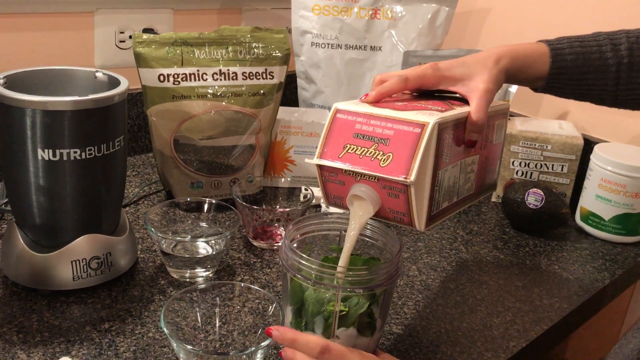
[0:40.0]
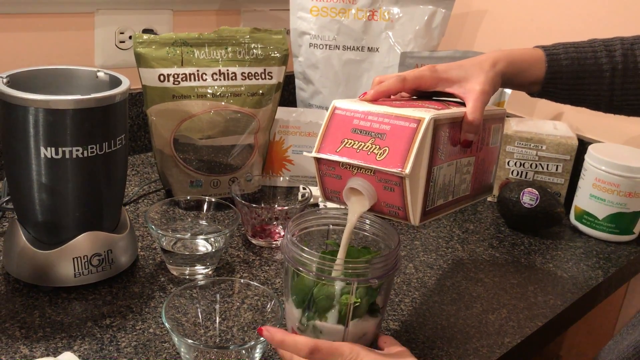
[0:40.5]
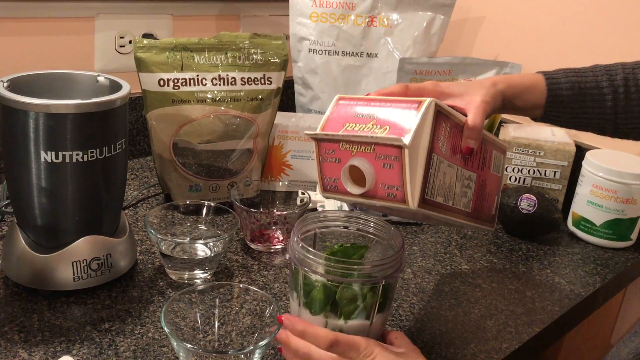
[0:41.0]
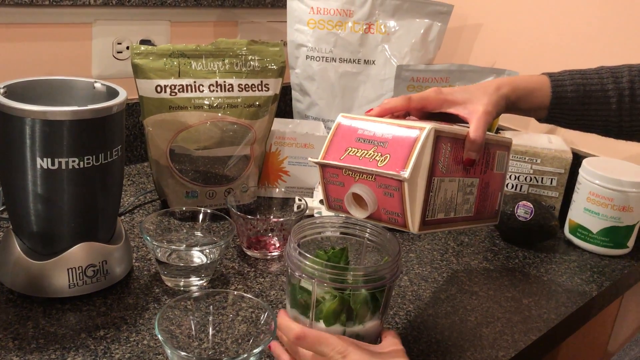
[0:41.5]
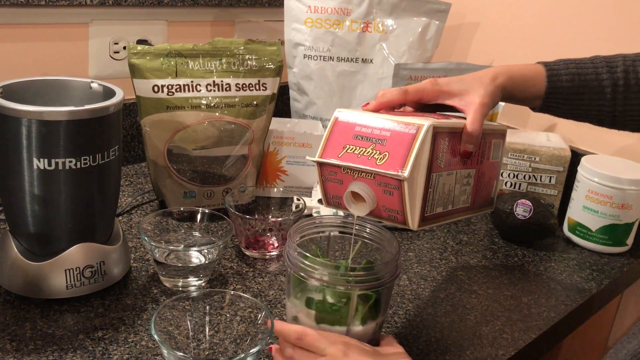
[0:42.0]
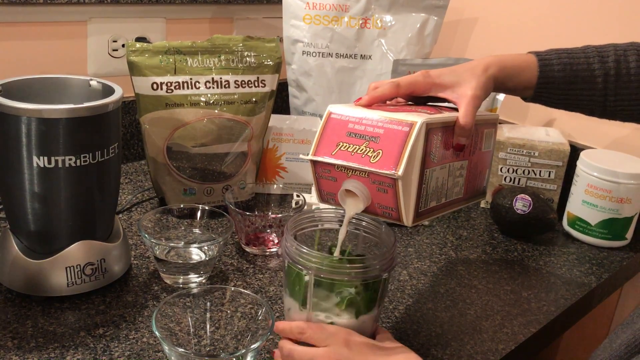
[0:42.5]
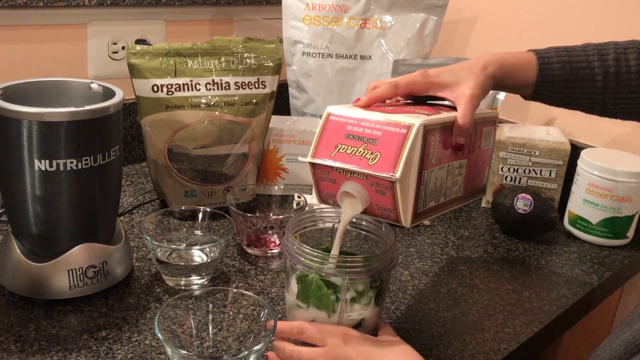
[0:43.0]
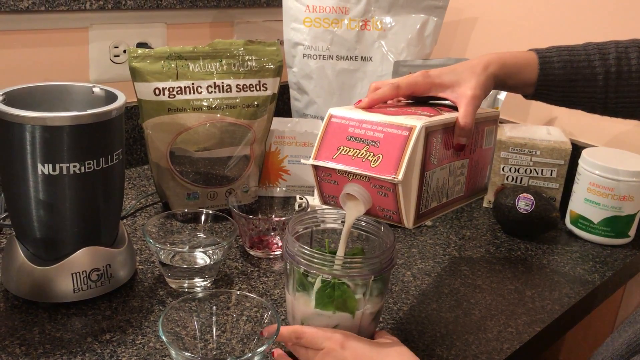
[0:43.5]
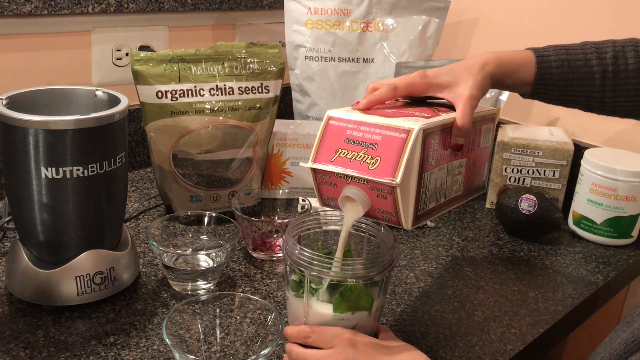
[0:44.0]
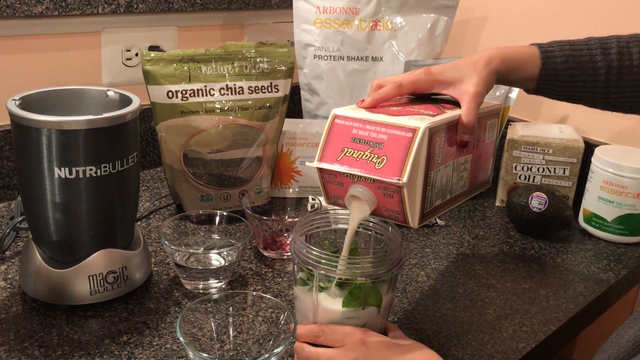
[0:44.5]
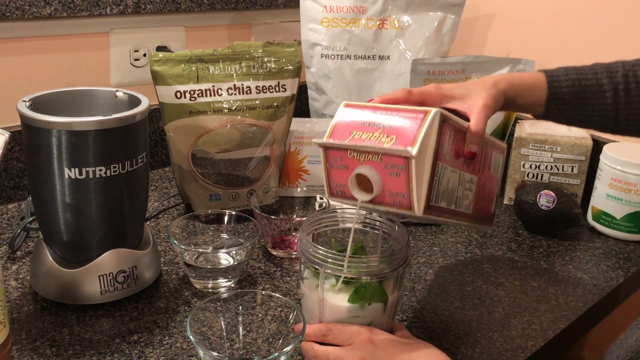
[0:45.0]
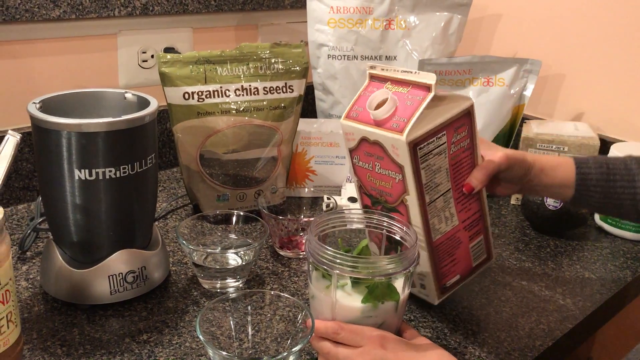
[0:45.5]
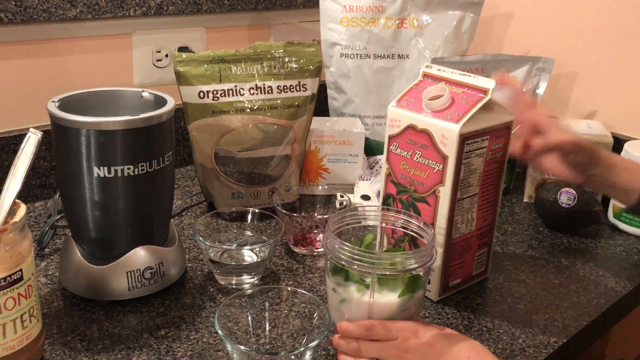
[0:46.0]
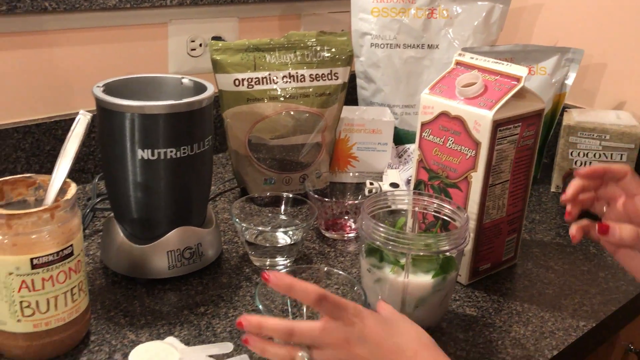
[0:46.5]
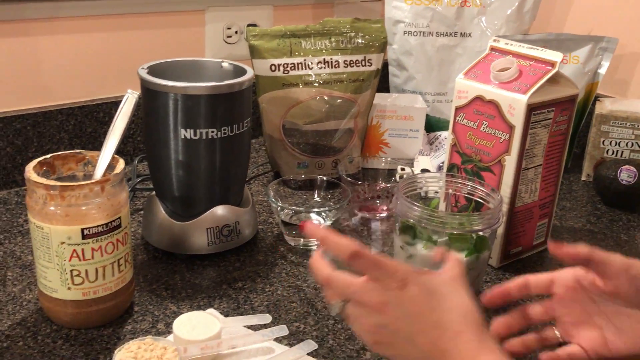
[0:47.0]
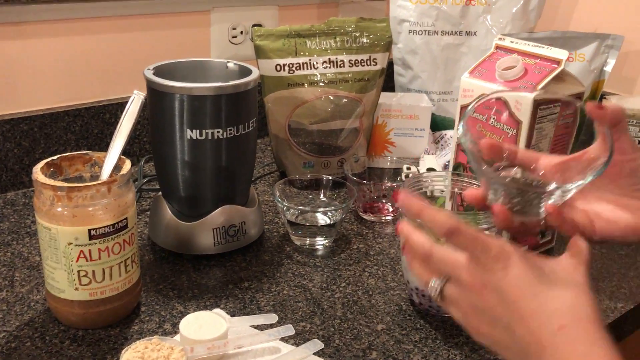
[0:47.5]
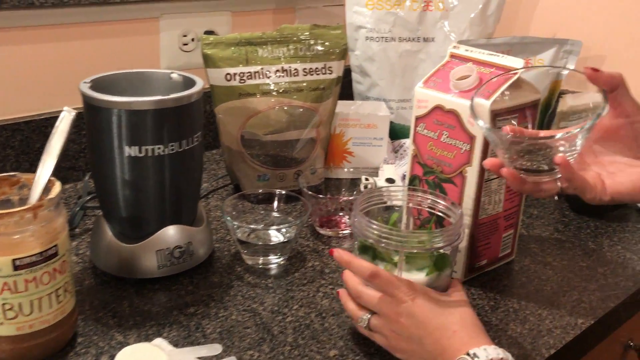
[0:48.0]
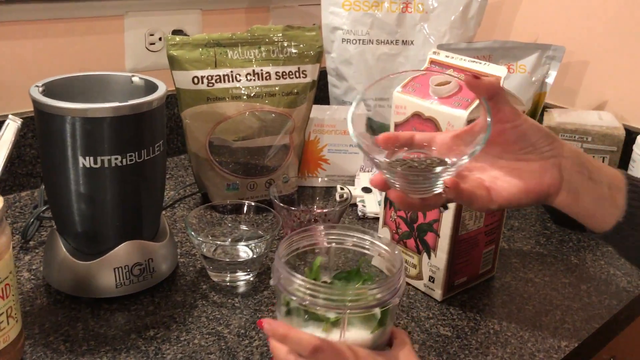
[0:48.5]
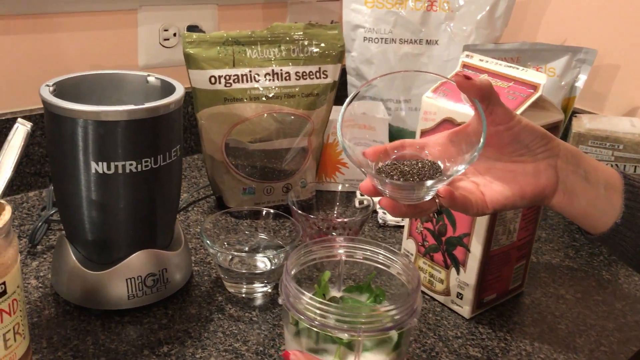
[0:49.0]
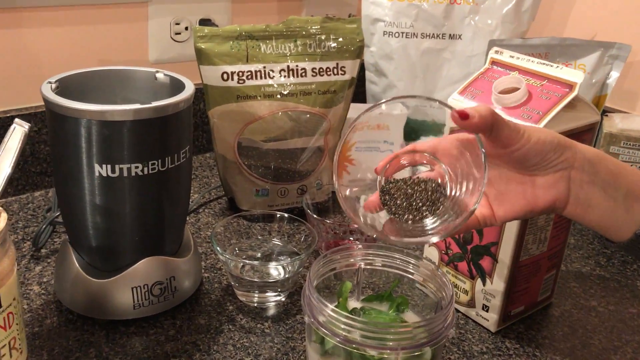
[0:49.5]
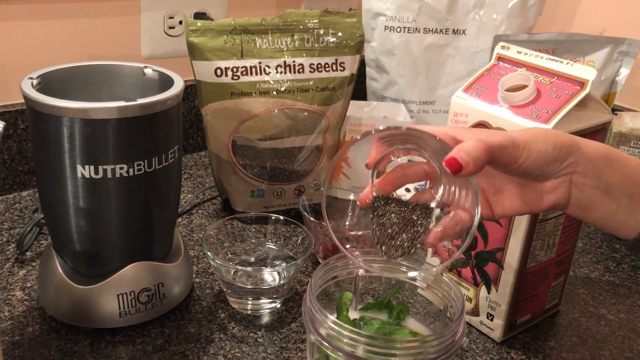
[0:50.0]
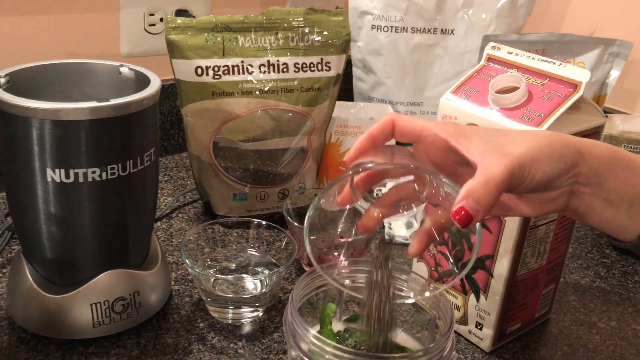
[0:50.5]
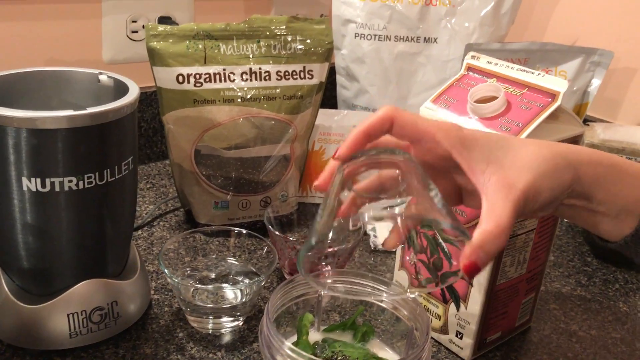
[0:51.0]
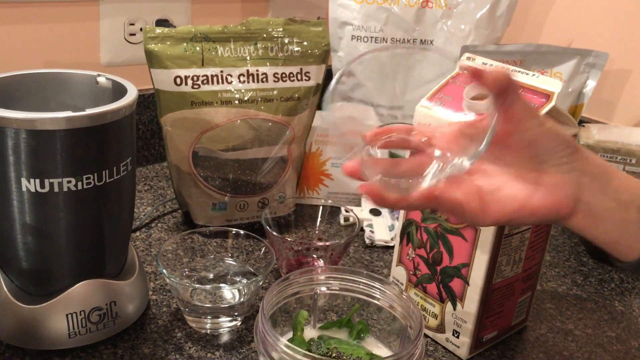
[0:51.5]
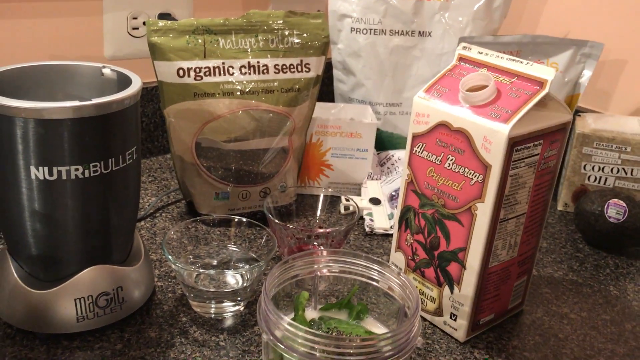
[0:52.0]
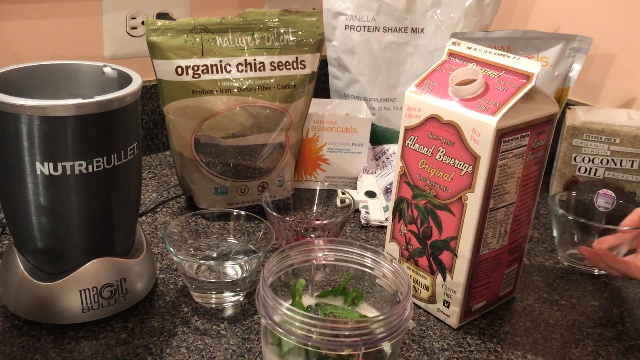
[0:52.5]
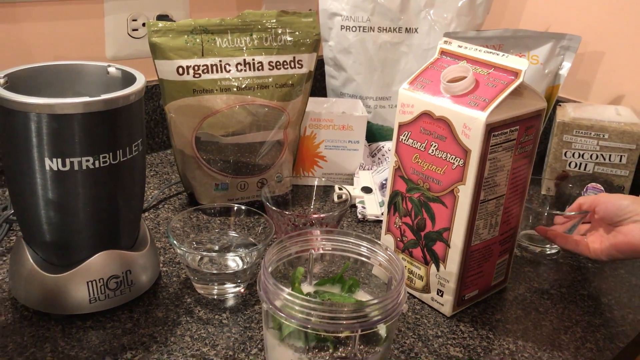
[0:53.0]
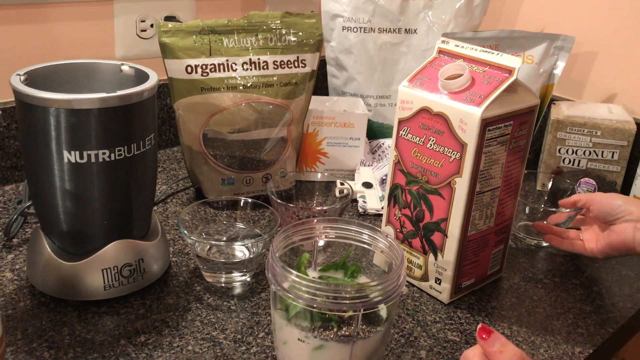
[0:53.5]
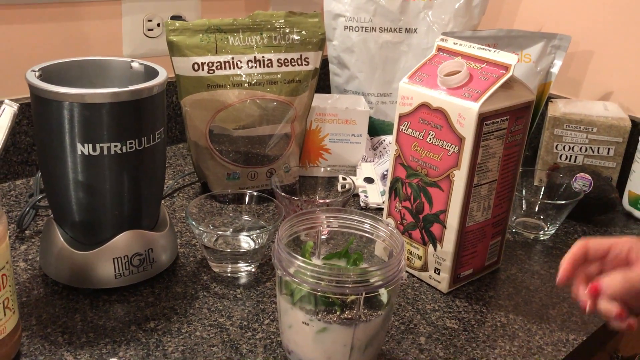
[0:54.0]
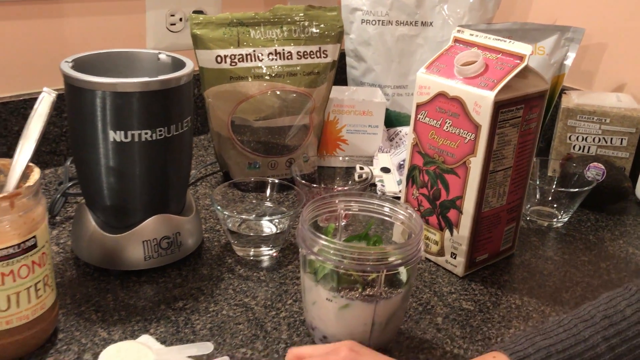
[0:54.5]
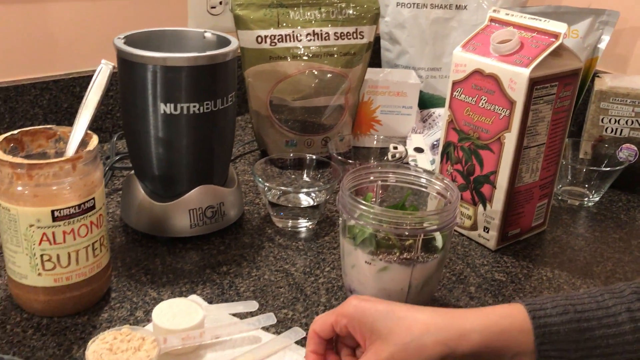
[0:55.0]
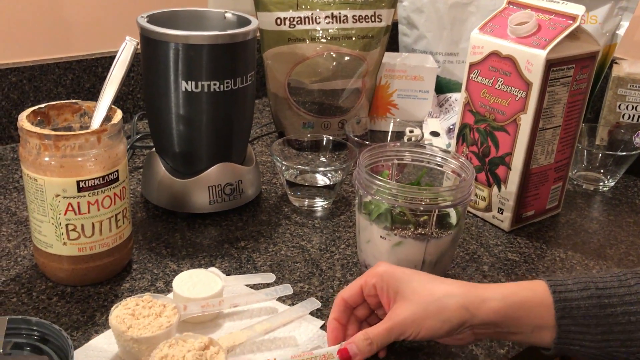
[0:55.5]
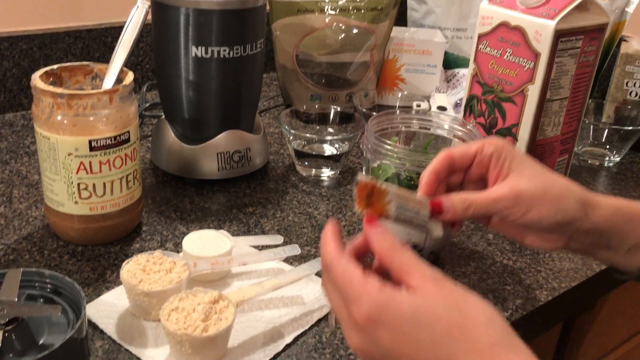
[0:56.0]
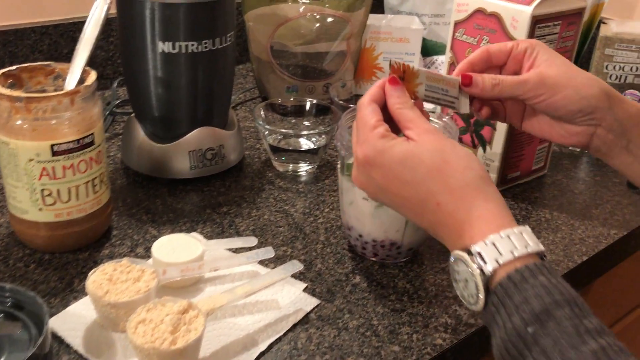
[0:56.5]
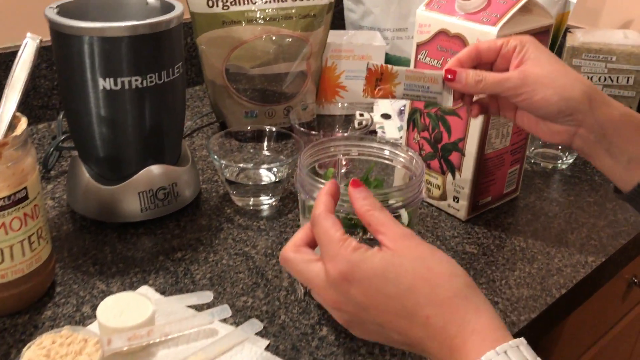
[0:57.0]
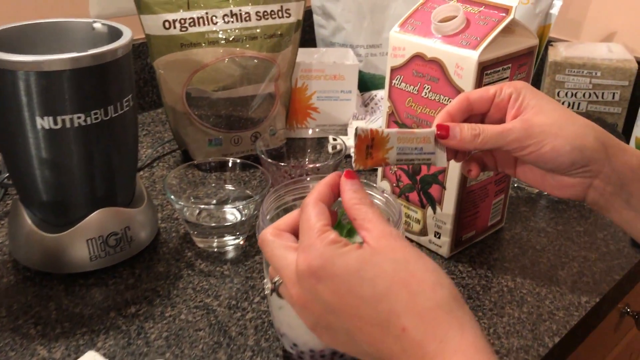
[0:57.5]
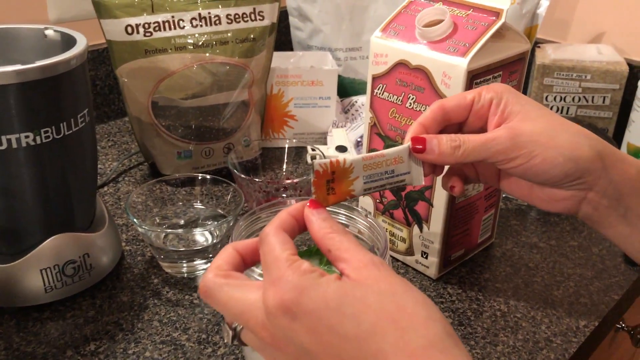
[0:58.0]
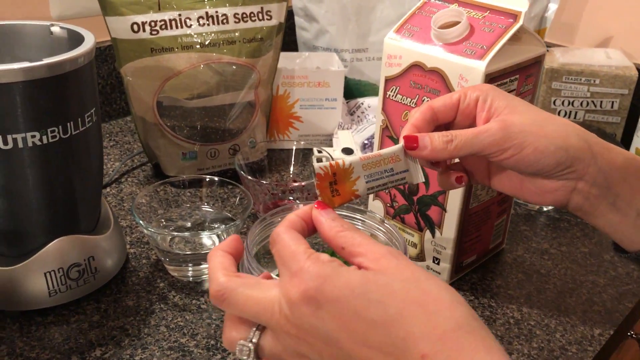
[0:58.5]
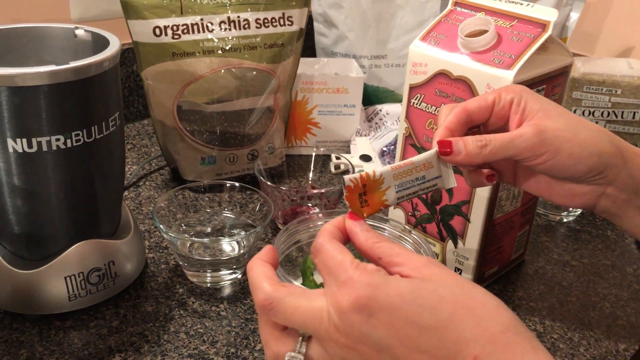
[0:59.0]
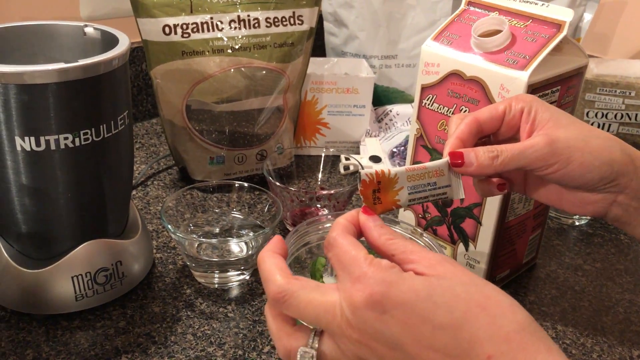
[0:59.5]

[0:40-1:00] She adds the almond beverage to the jar of the blender, turning the jar around until the green leaves are almost covered with the milk. She then adds chia seeds from a glass bowl, followed by a sachet of something unidentified; the writing on the sachet cannot really be seen. Coconut oil is among the ingredients on the table. Where she took the sachet from, there are some measuring spoons that have something in them.